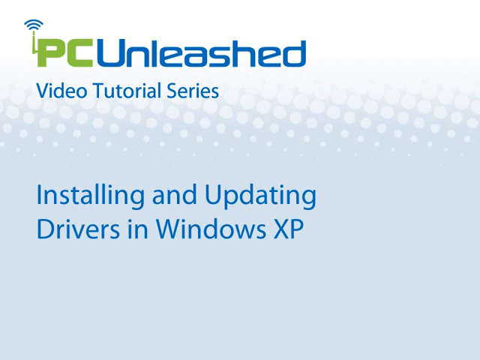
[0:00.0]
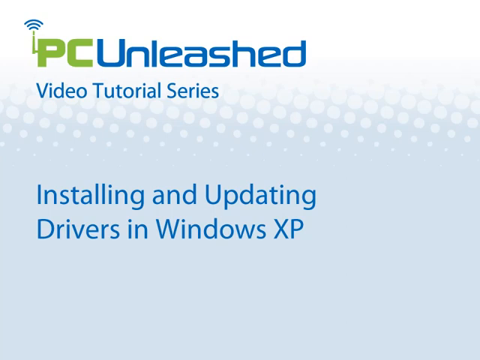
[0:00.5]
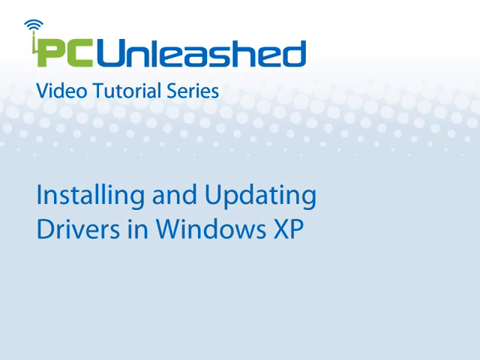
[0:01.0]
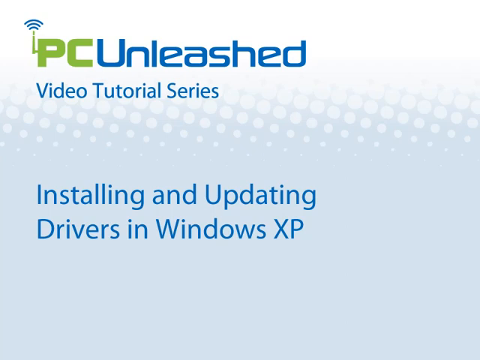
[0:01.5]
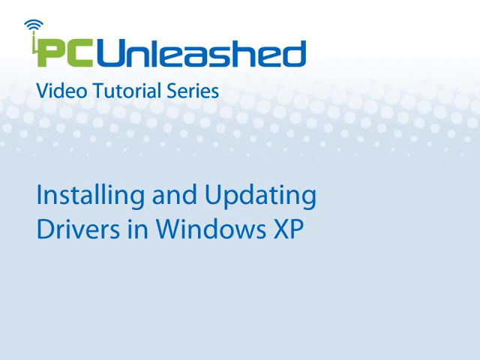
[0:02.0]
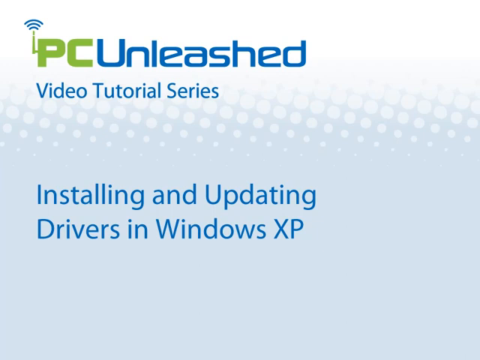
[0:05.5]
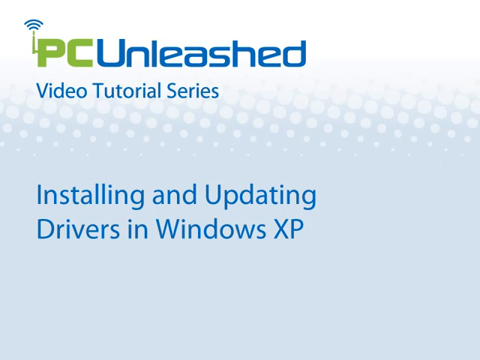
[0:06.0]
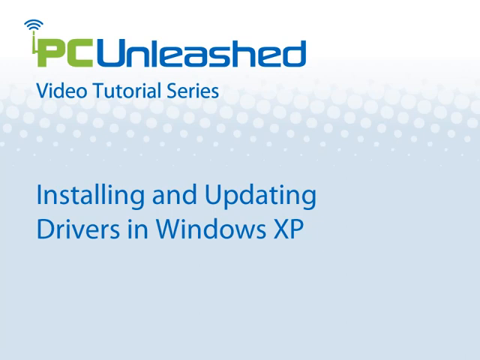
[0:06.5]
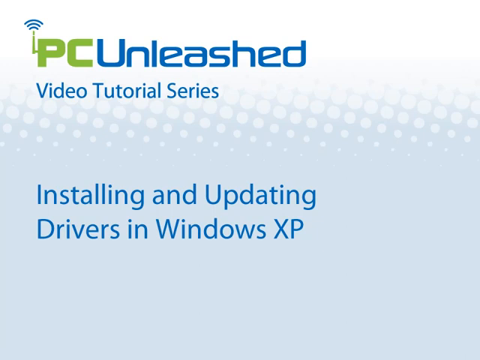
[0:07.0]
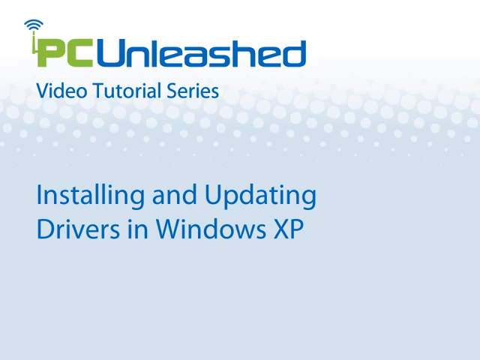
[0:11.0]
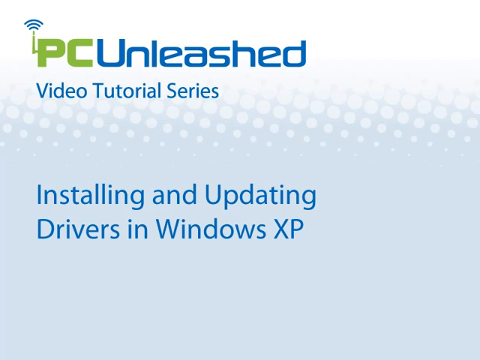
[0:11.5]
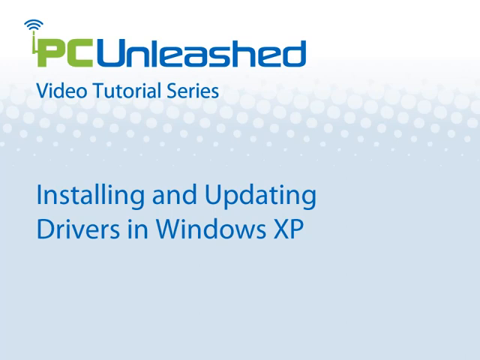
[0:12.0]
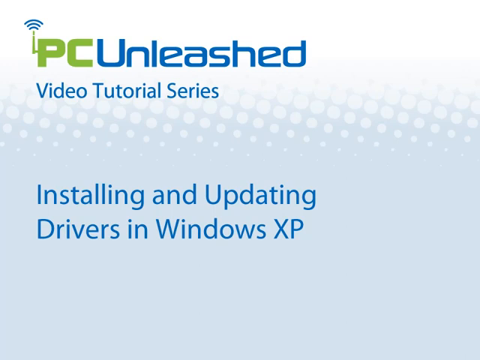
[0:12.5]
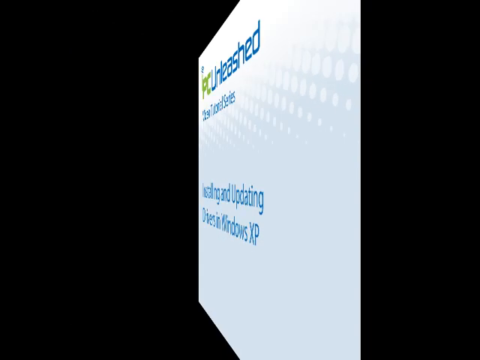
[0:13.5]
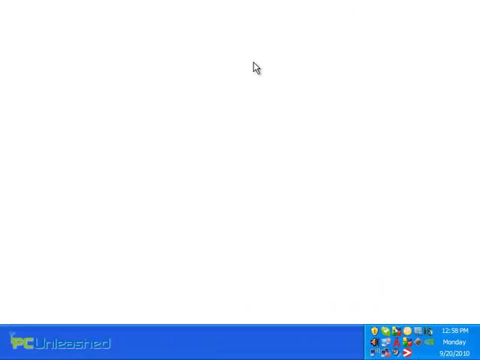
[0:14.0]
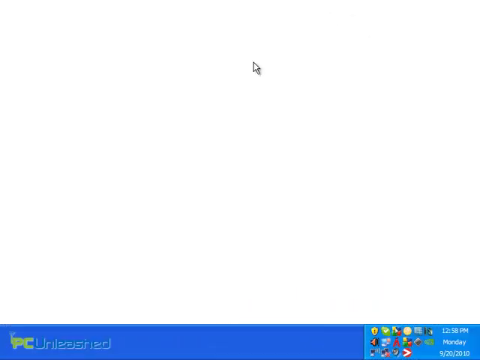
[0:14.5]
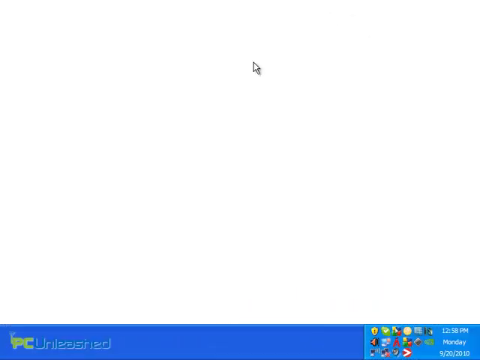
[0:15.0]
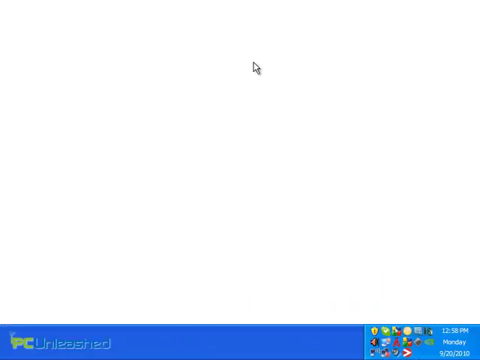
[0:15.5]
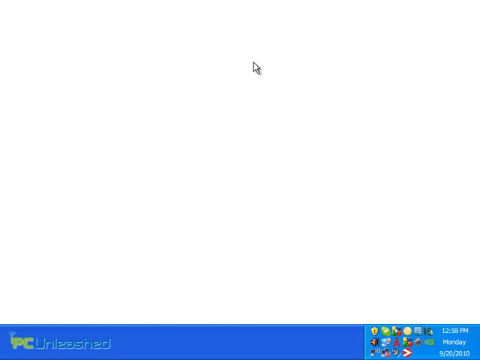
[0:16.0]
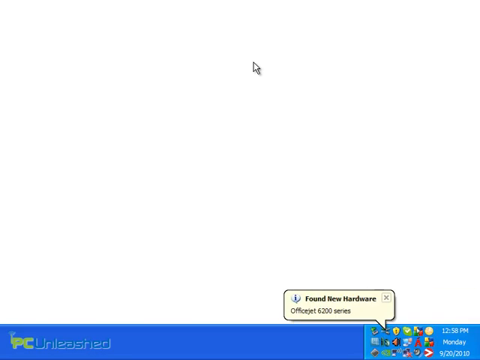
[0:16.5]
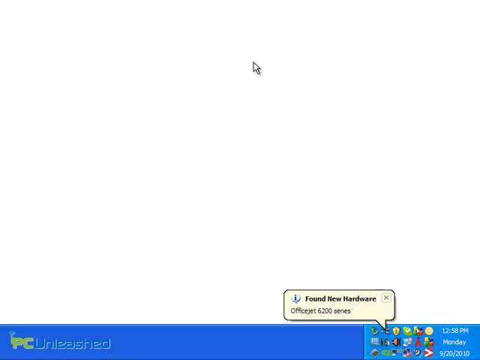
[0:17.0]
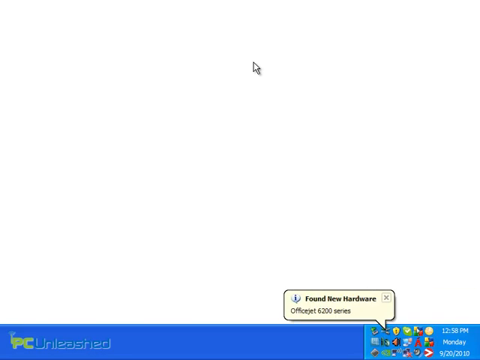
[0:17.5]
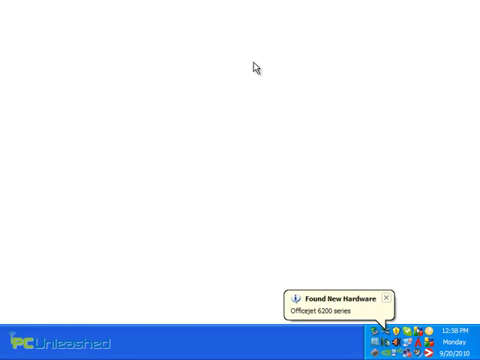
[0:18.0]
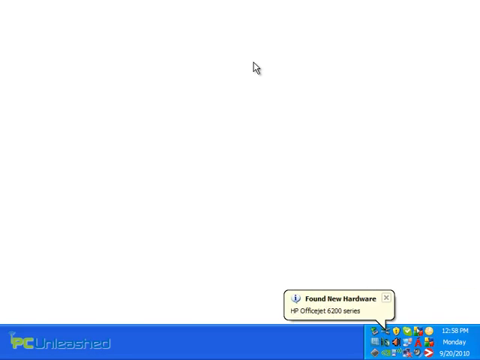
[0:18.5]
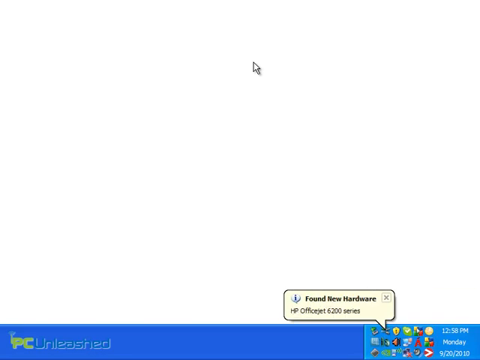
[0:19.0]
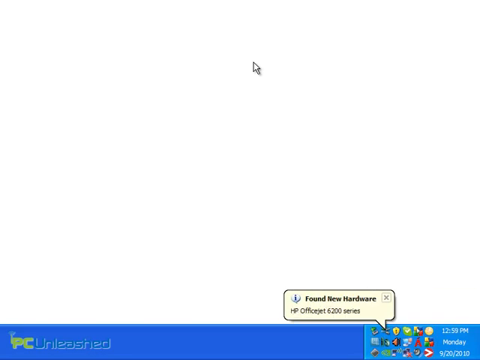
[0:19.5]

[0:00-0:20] A screen displays the text "installing and updating drivers in Windows XP" and "PC Unleashed White Tutorial Series." The view then changes to a desktop with a white screen and a couple of icons at the bottom right. The time reads 12:58 p.m. on Monday. It is probably a tutorial, and an old one, judging by how old the Windows system looks. Notification bars appear, such as "found new hardware," and some icons pop up in a different language. Apart from the white screen, there is an old mouse crosshair in the middle.